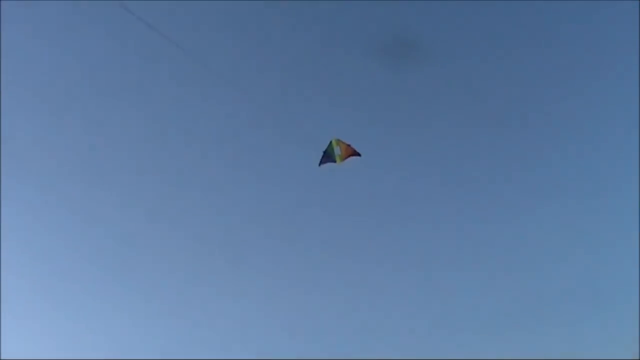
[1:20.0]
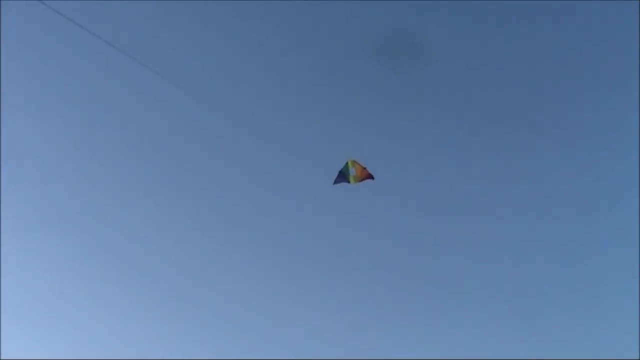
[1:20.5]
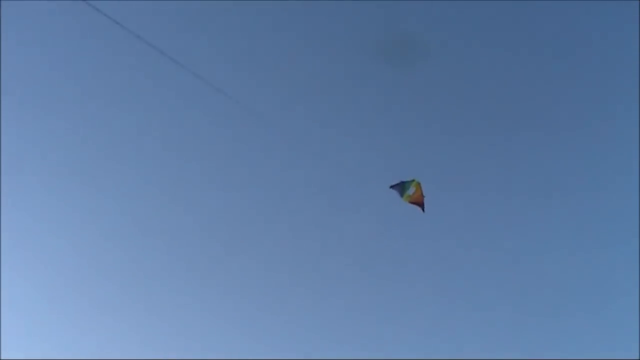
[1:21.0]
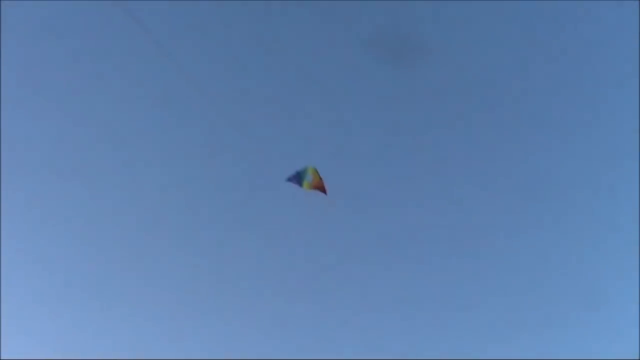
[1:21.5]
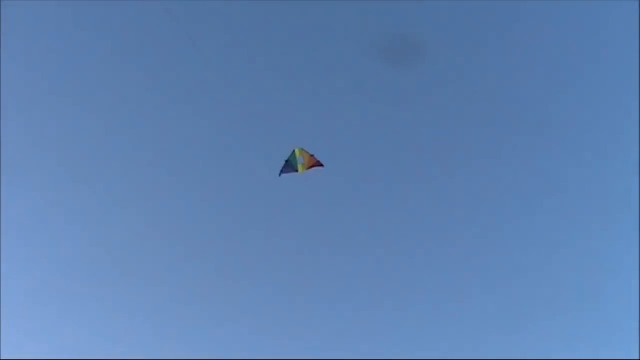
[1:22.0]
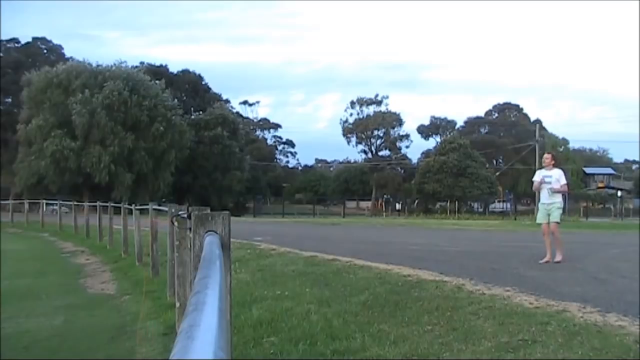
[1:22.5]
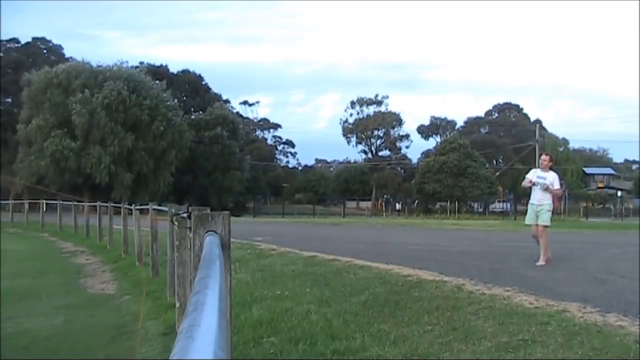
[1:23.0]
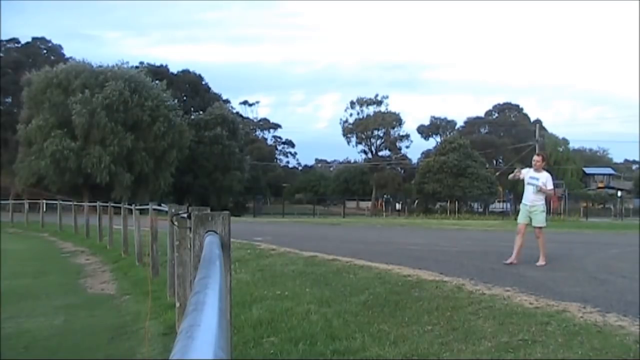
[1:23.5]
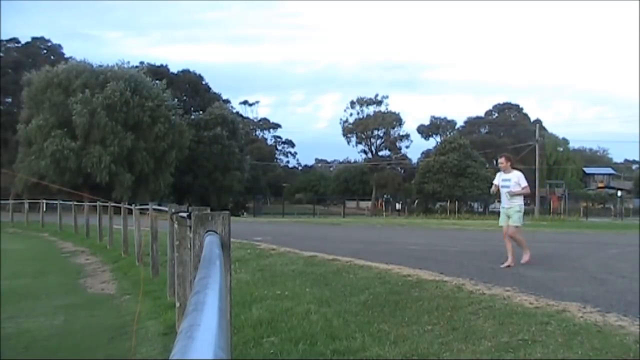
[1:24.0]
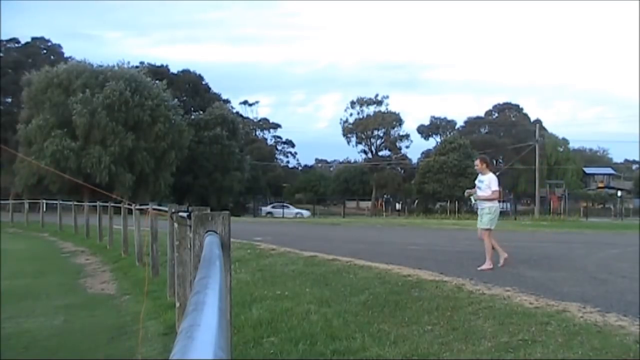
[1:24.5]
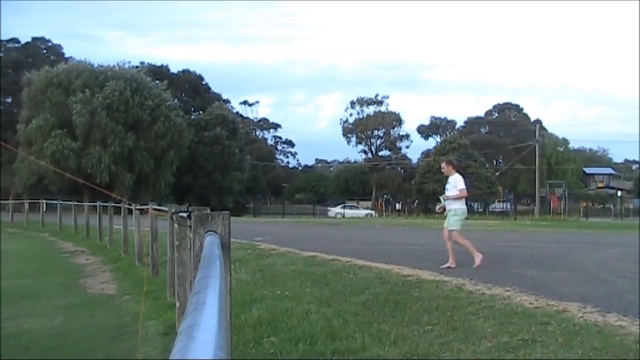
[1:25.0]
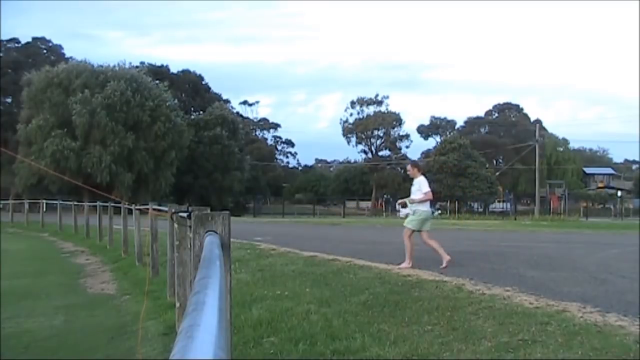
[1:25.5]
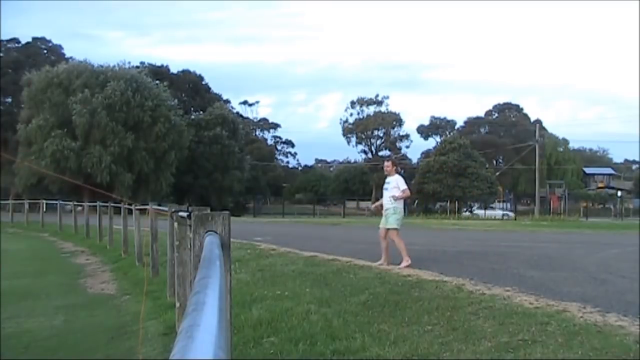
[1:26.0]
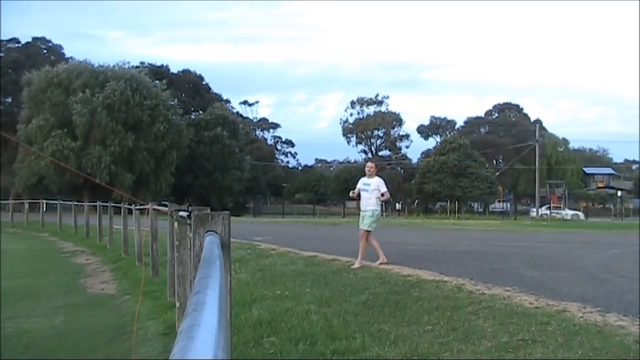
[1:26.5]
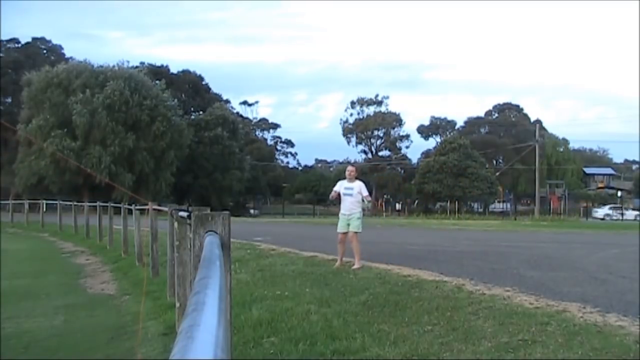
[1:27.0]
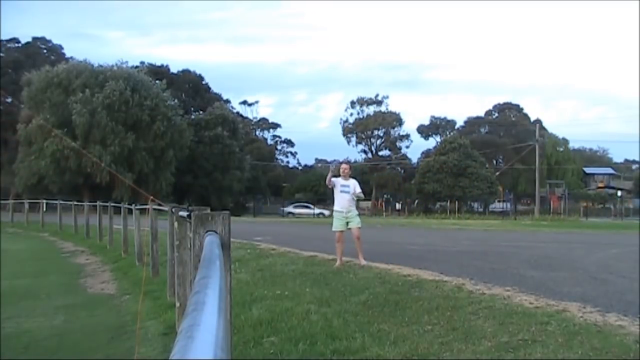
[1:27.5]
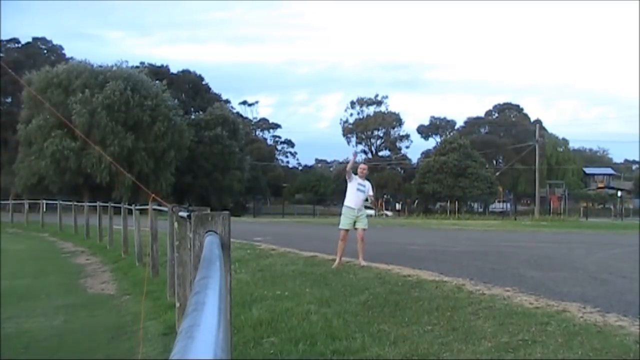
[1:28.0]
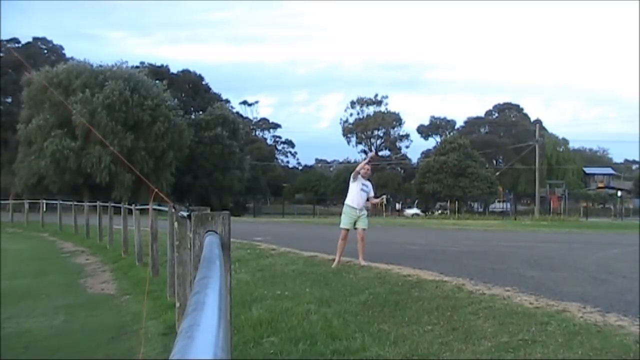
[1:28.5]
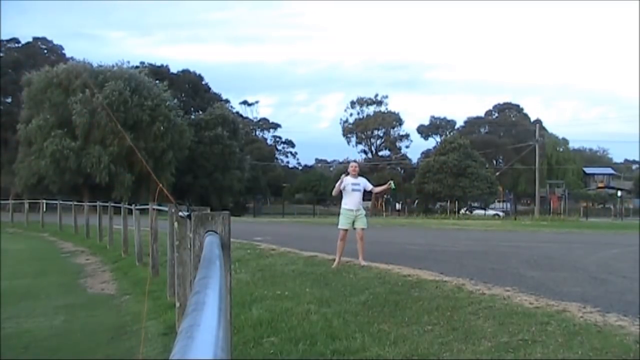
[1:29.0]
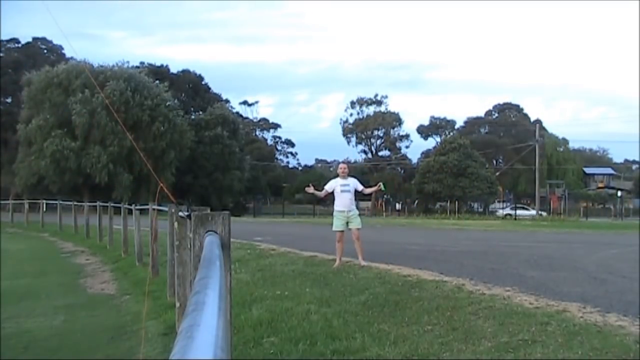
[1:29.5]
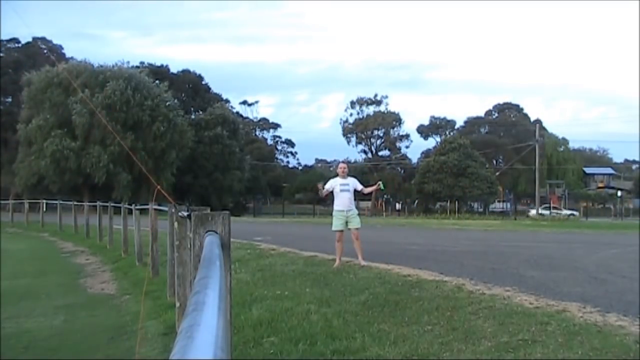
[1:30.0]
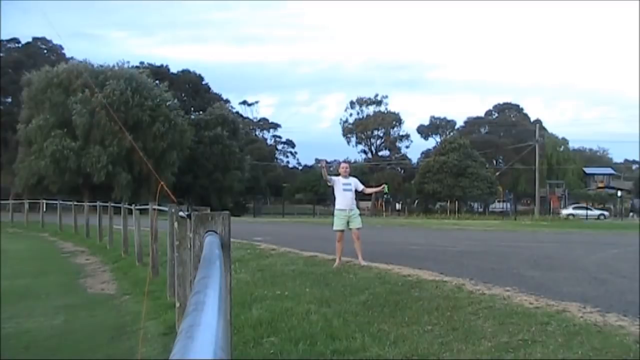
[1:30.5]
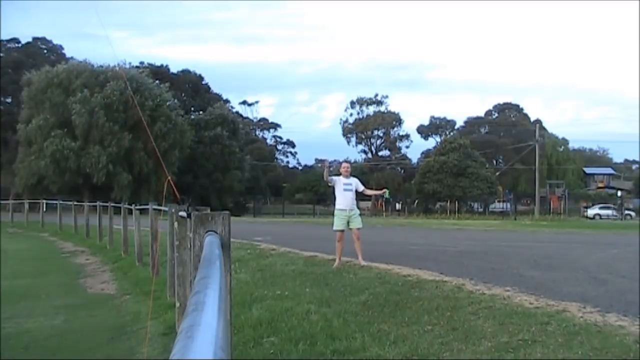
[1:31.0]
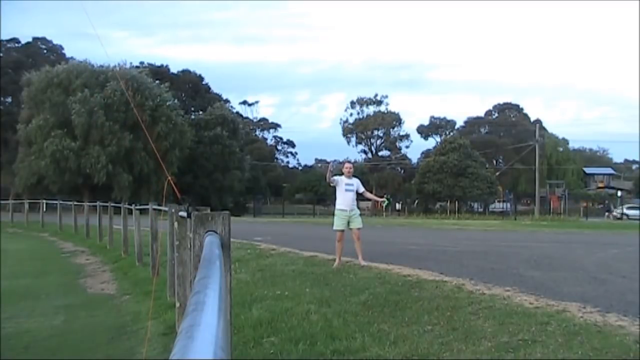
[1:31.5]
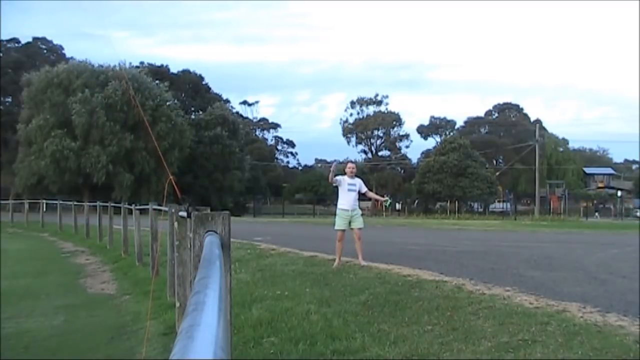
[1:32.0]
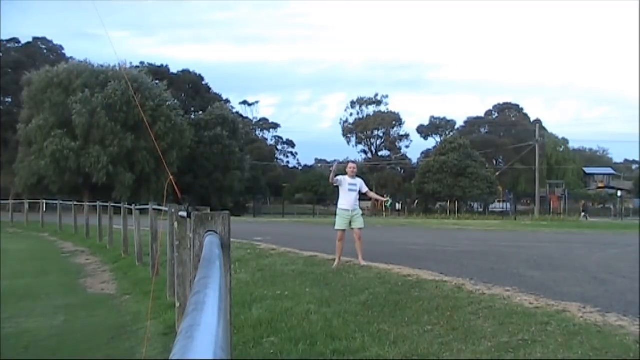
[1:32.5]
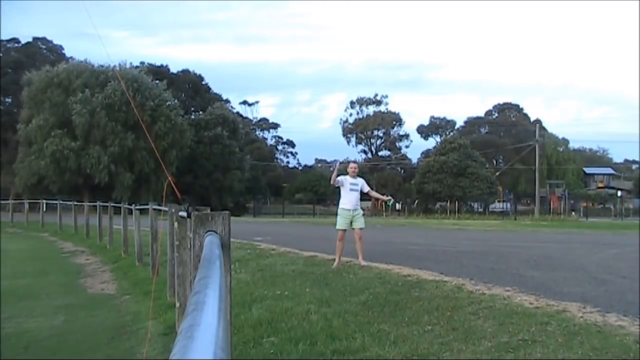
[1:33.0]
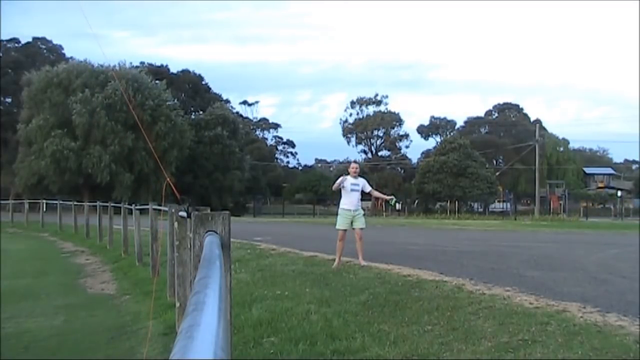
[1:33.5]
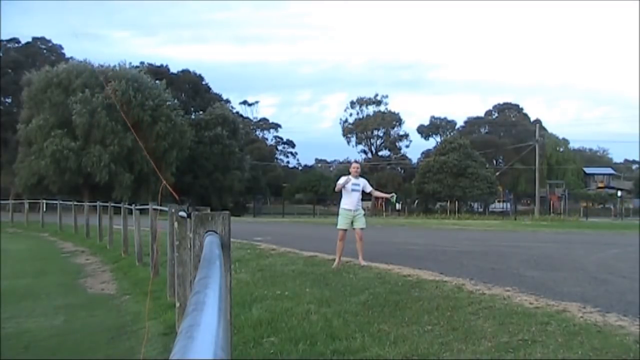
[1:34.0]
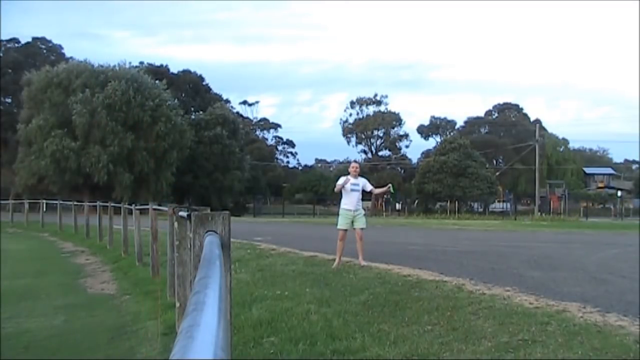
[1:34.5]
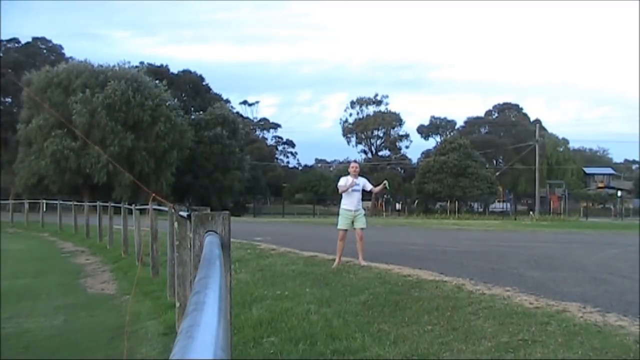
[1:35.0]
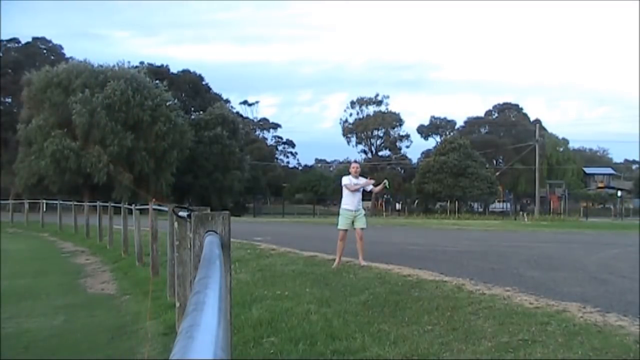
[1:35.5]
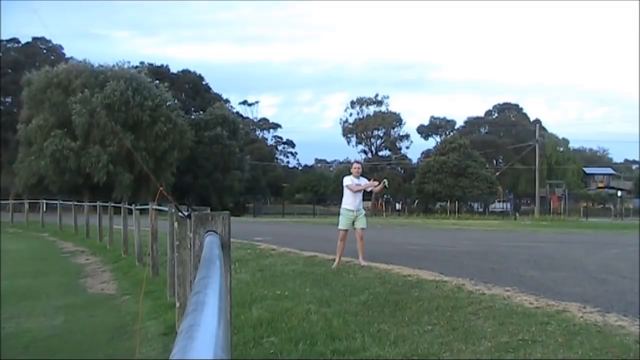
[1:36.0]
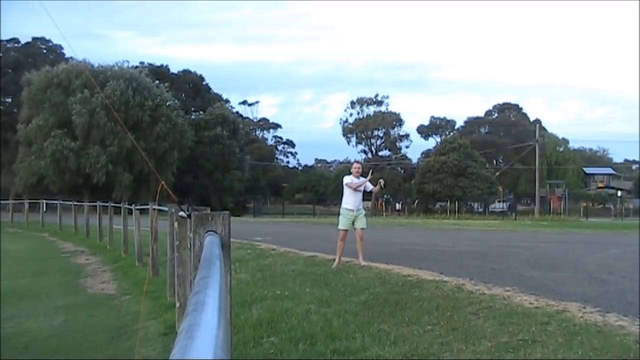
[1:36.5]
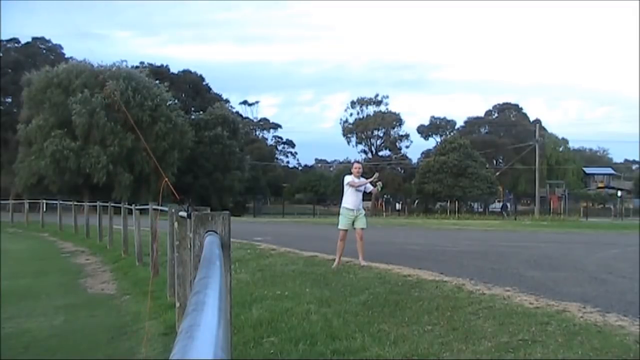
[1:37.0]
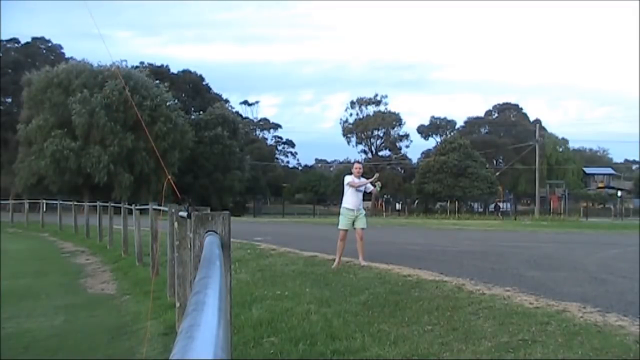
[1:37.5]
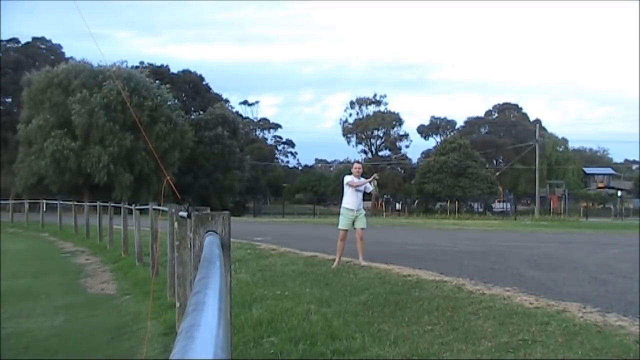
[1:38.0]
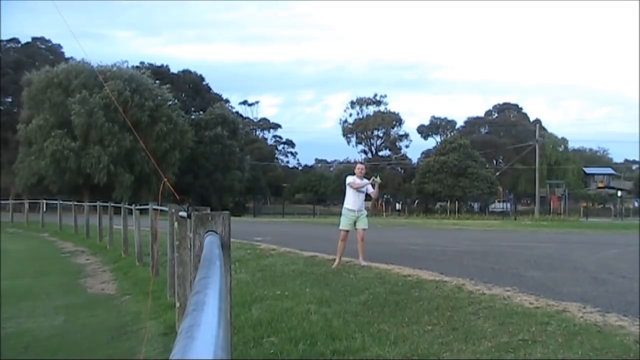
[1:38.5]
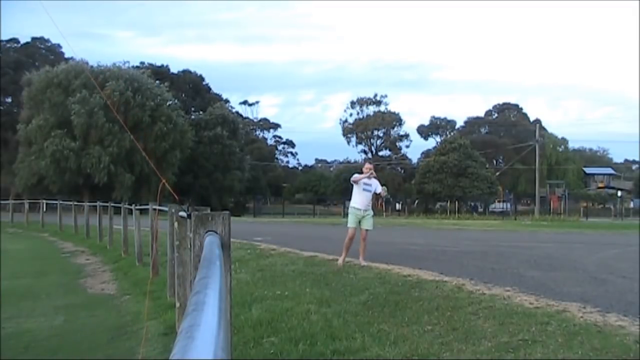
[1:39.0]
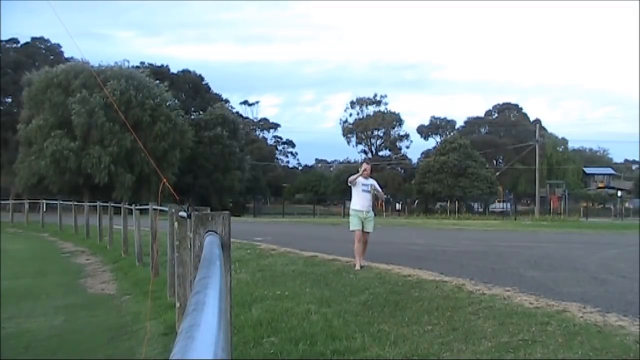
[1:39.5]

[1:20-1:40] The kite is shown flying; it looks triangular and rainbow-coloured, with a clear rectangular portion in the middle, against a very blue sky. The scene cuts to the man walking barefoot toward a fence on a road next to the fence with posts, with many trees, including eucalyptus trees, in the background; the place is believed to be Australia. The kite seems to be attached to the fence, and he is on the other side of it, talking with his hands and holding something in his left hand that might be a frequency device to control it. The video cuts back to the rainbow kite: its line is barely visible on the left-hand side, one faint black cloud is at the top of the screen, and otherwise the kite is lying in a blue background.